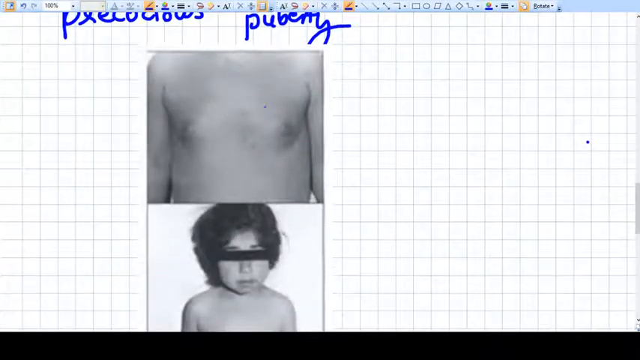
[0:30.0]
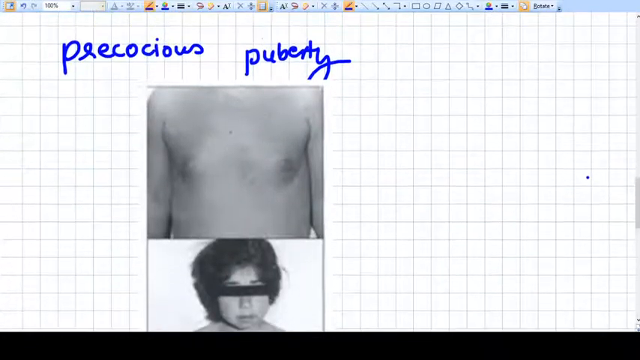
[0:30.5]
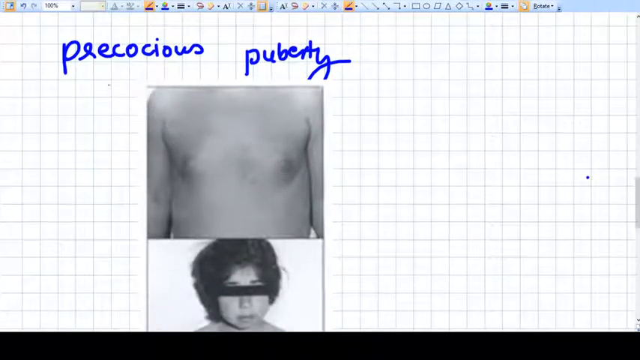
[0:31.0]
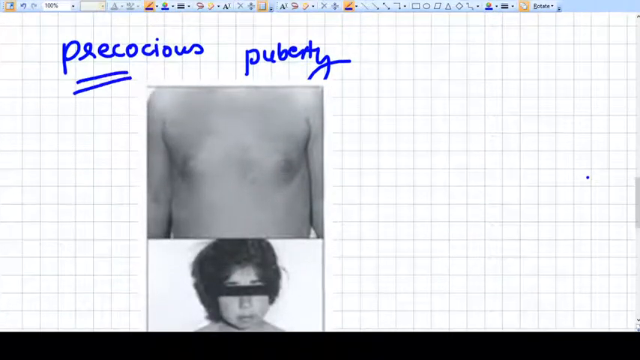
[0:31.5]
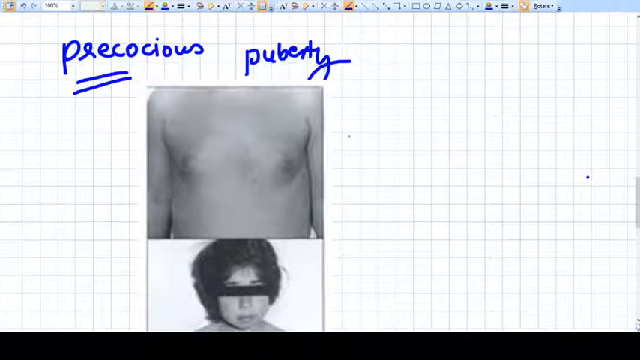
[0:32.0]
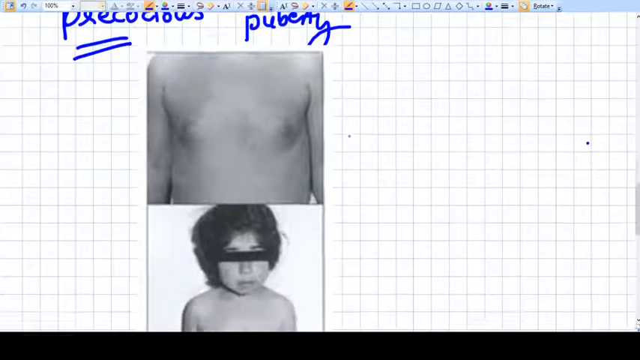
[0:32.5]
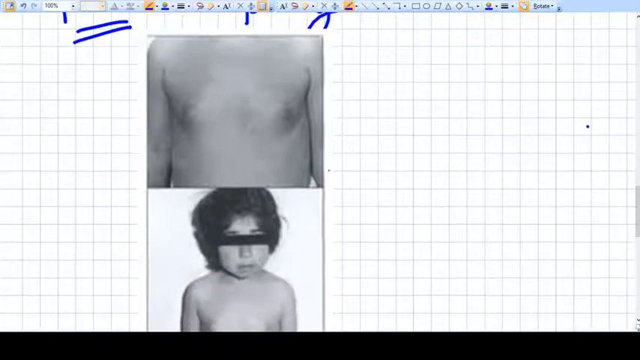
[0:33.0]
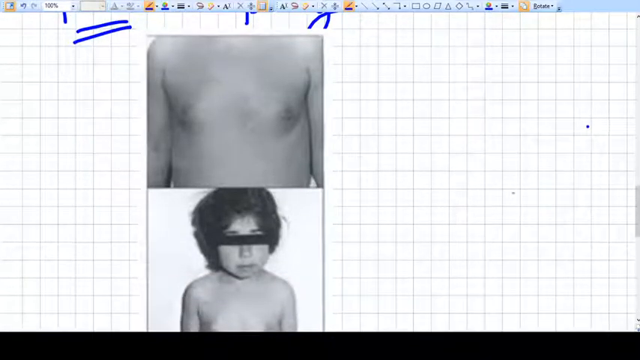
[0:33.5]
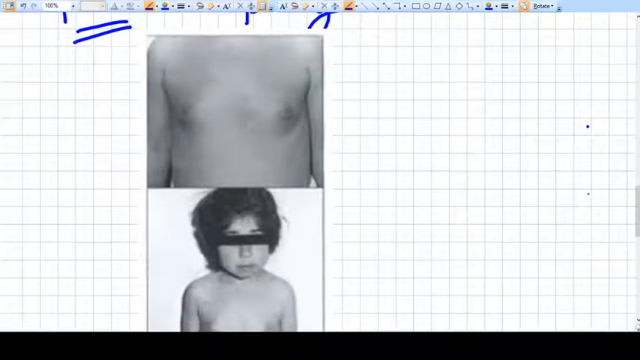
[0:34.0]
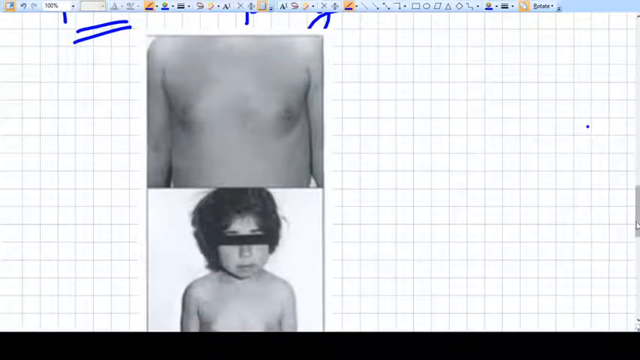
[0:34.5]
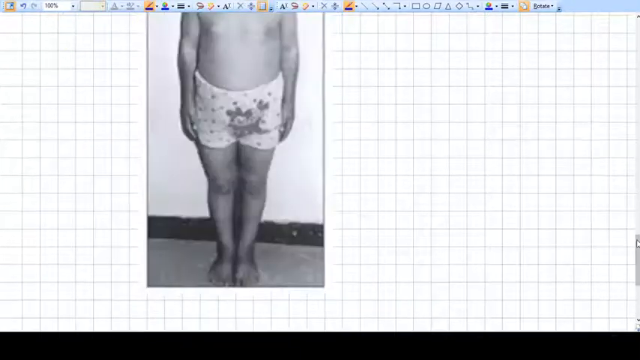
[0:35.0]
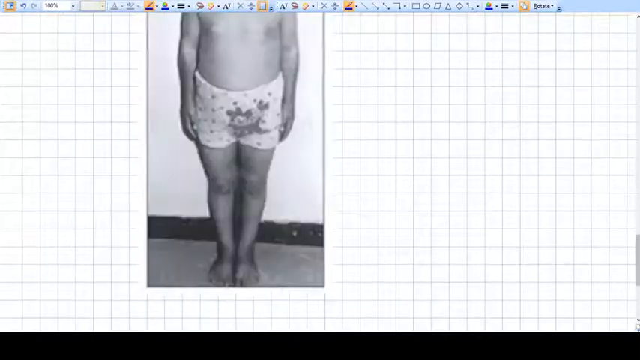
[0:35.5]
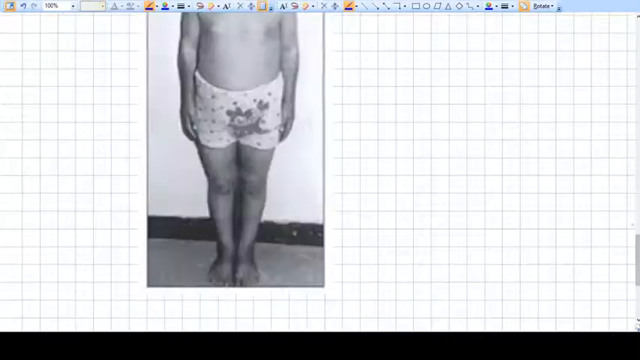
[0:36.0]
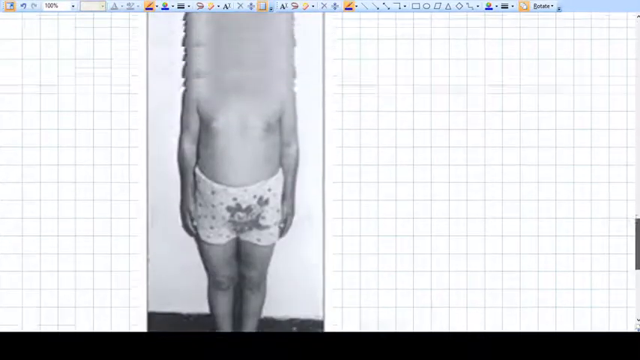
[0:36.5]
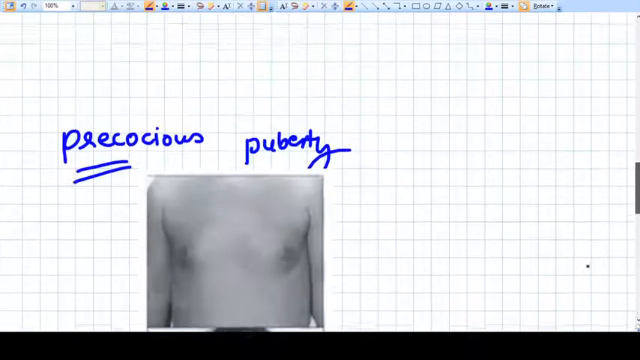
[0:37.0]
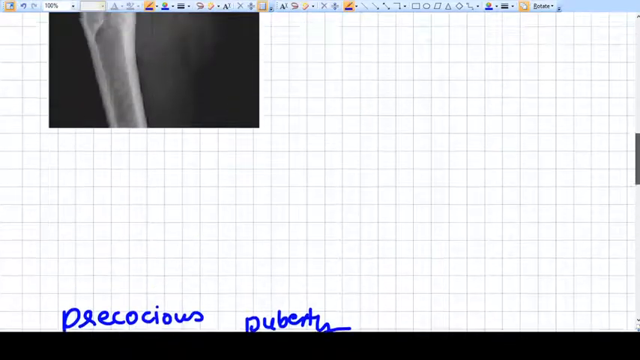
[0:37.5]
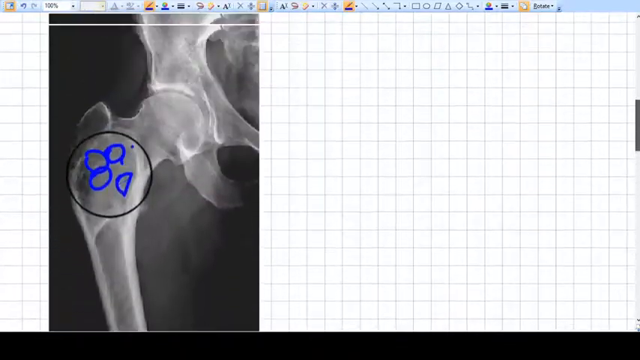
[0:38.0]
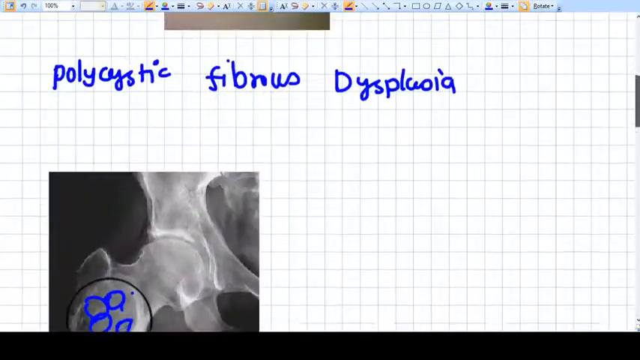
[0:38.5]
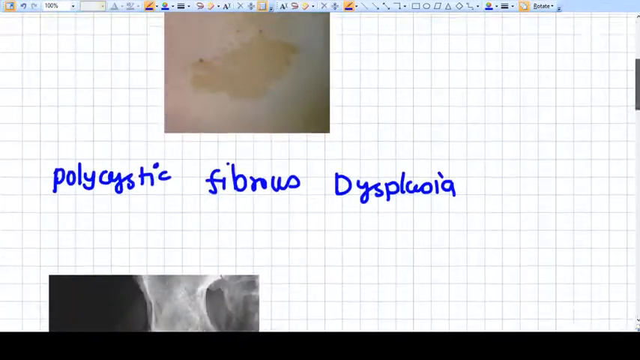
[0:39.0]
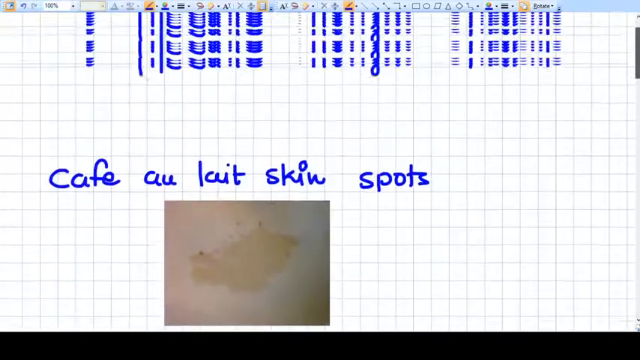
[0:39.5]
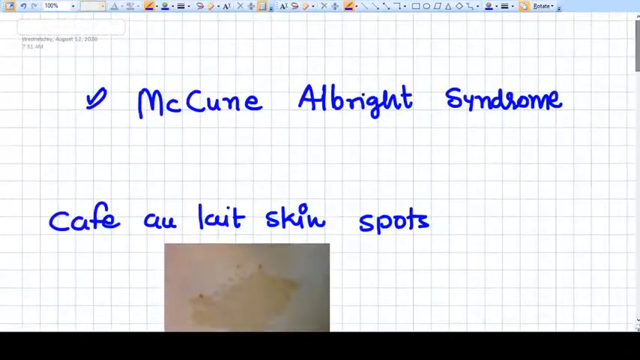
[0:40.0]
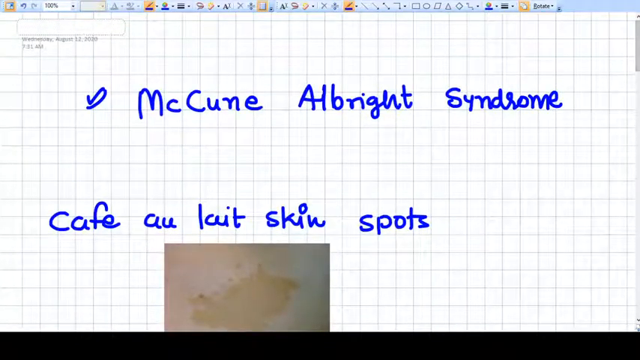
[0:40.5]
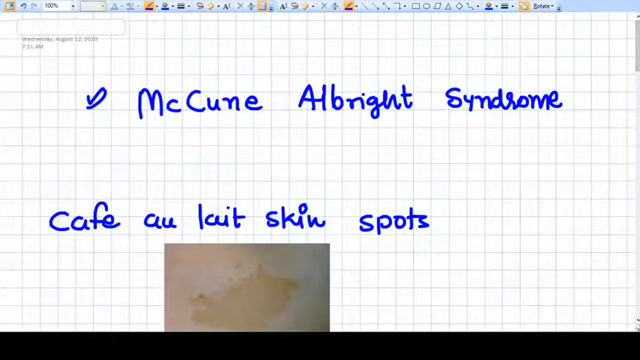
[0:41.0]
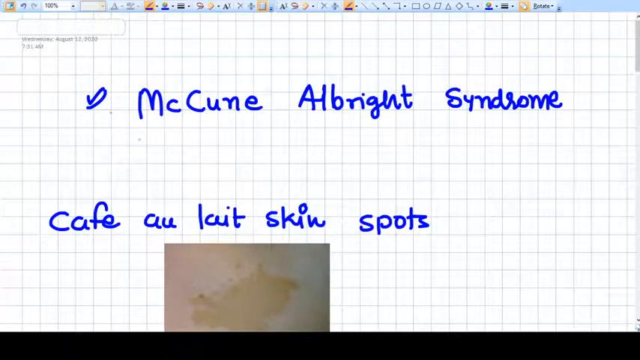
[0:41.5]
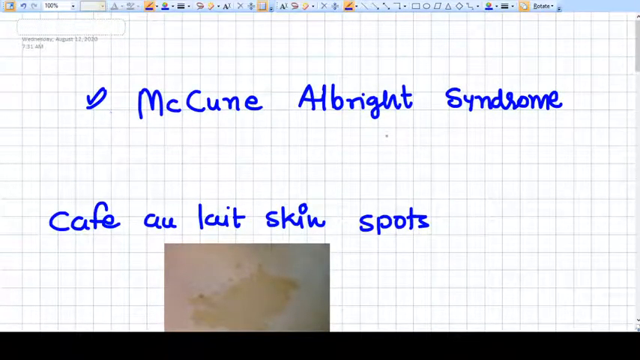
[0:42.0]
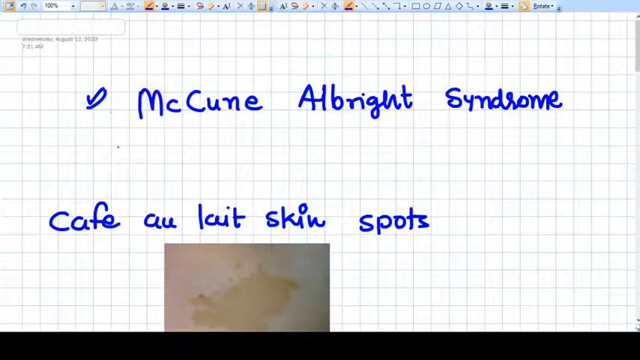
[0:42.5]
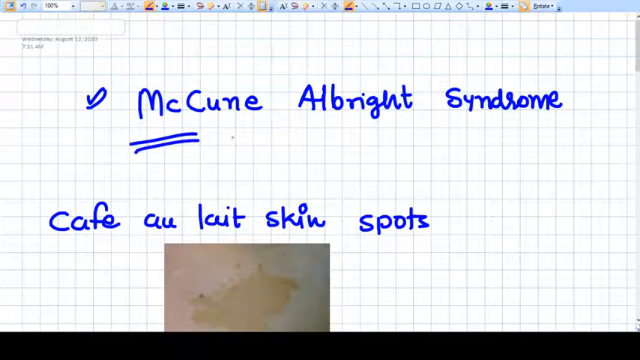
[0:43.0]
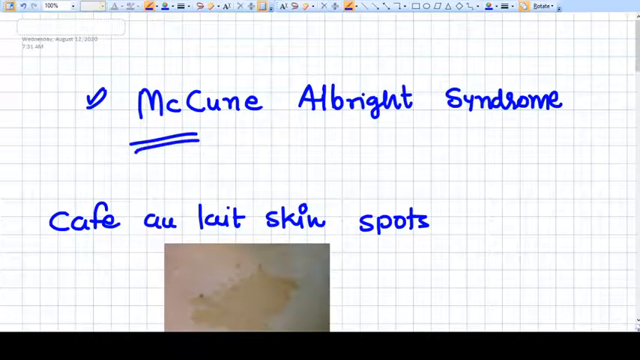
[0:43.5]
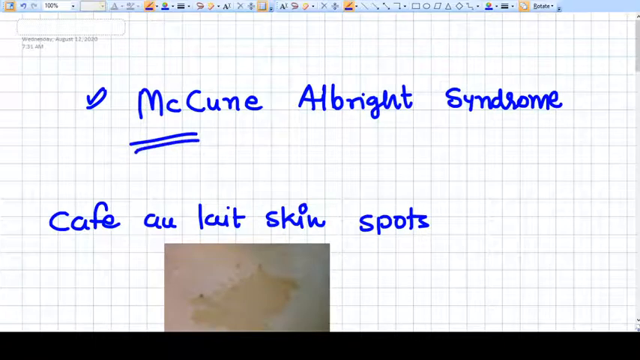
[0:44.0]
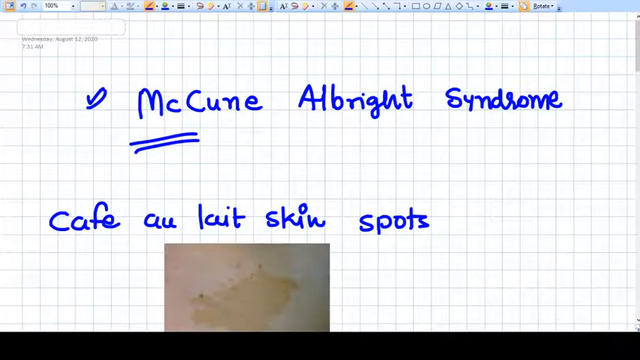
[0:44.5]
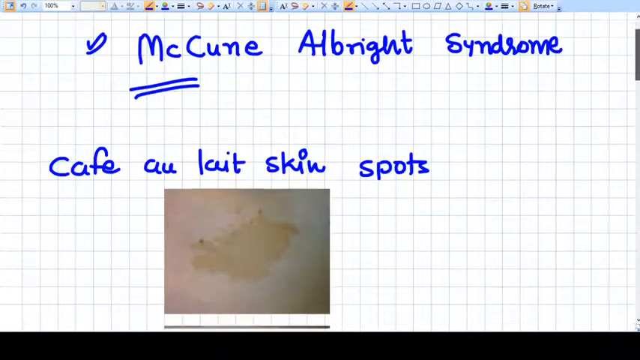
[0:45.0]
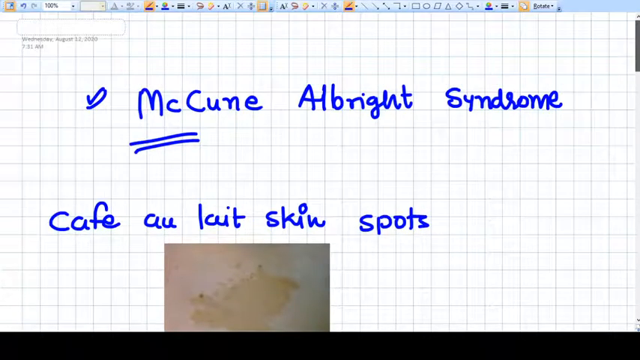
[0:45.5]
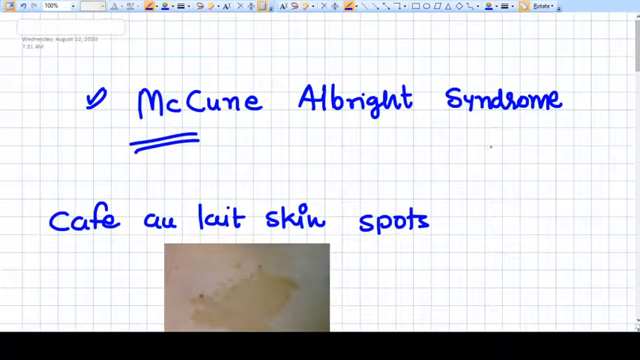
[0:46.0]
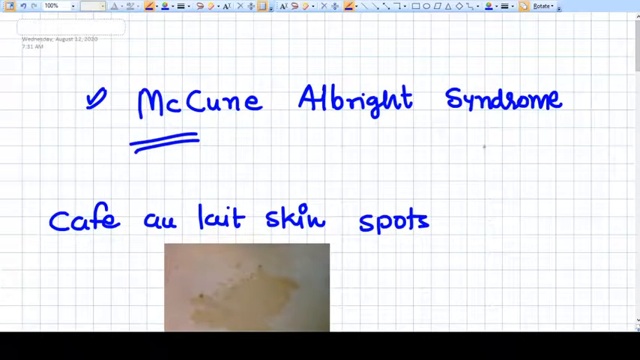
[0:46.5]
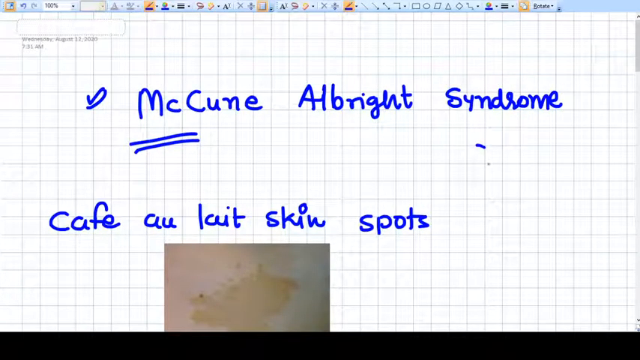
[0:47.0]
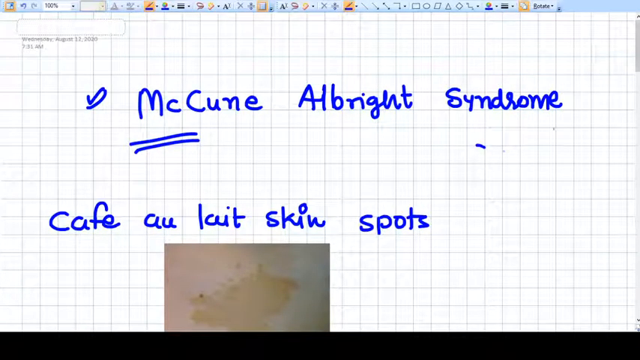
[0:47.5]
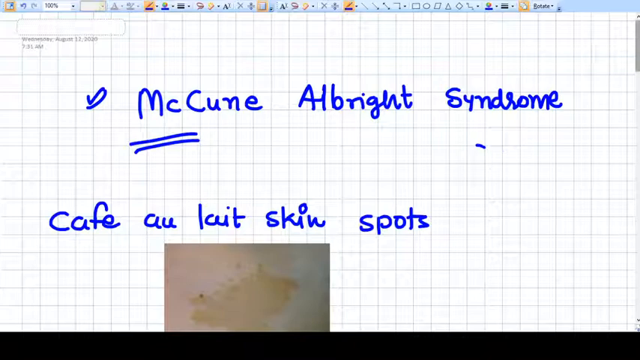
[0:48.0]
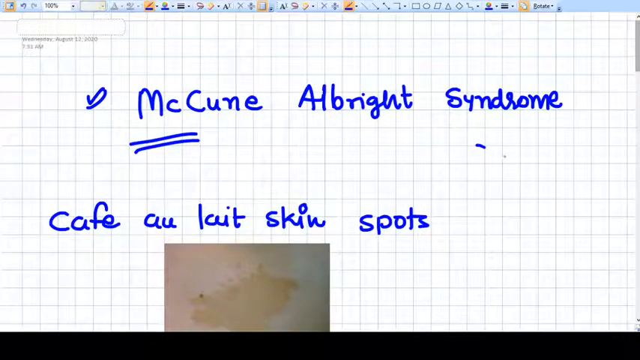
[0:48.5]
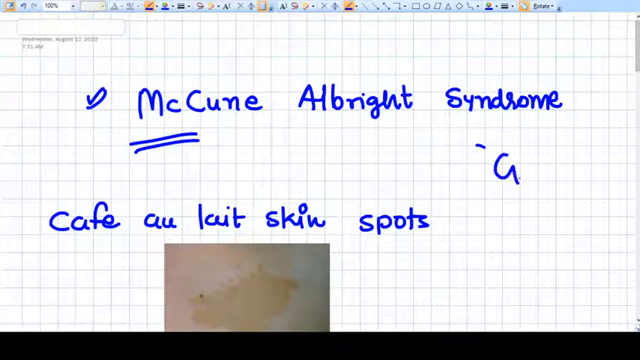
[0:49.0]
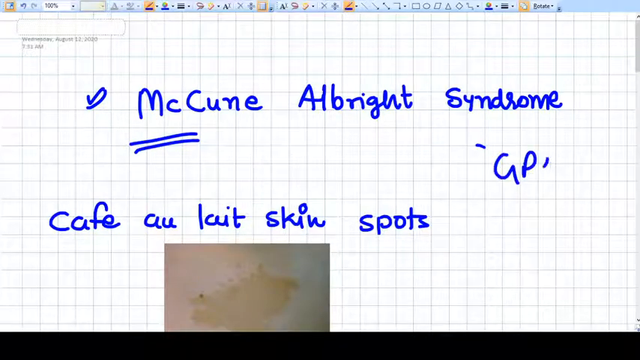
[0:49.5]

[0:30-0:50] The user underlines the "pre" part of "precocious" twice and scrolls down. The kid is wearing Mickey Mouse shorts and stands fairly straight, arms held tightly against the sides and feet held closely together. The view scrolls back up all the way to the top. In the top left corner, in faint black text, is the date: "Wednesday, August 12th, 2020, 7.51 a.m.", with the "7.51 a.m." portion on a second line below the rest. The user then underlines the "Mc" of "McCune." Earlier, the user had also drawn a little mark beside "McCune," though it is unclear whether it was a test of the markers or something else.